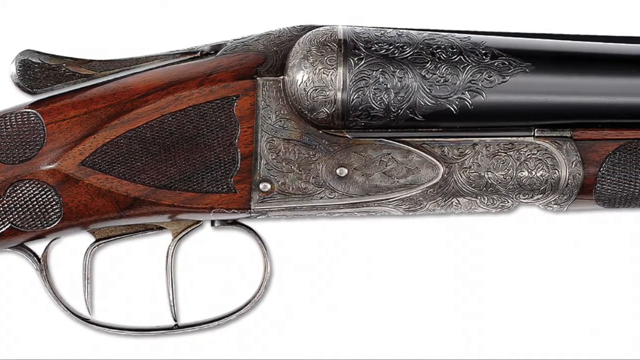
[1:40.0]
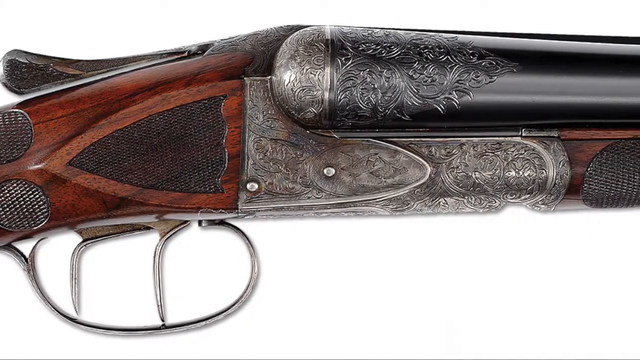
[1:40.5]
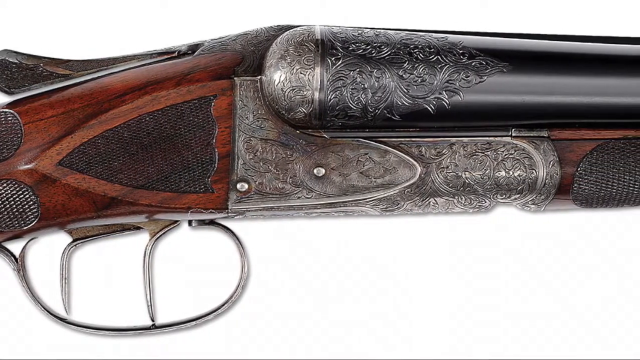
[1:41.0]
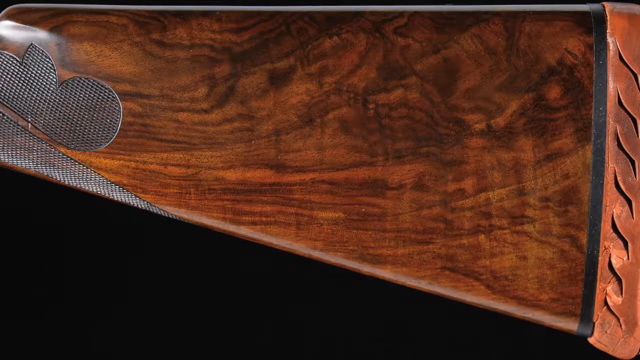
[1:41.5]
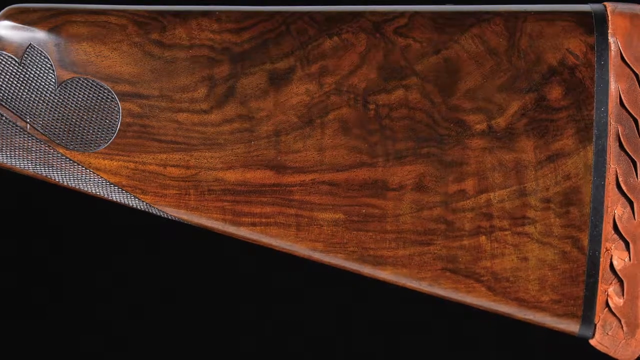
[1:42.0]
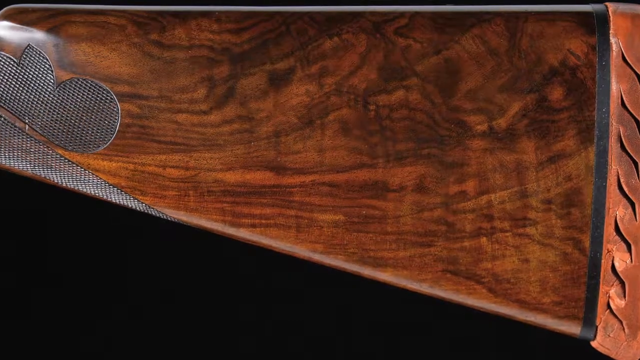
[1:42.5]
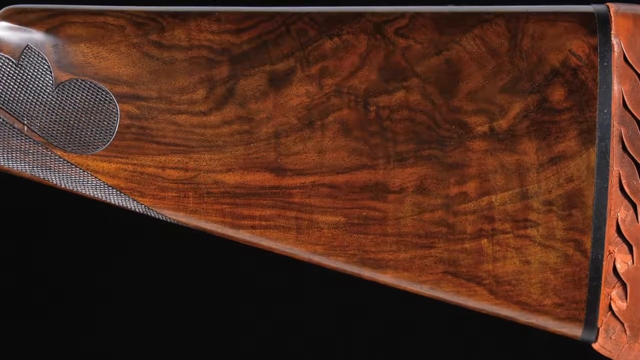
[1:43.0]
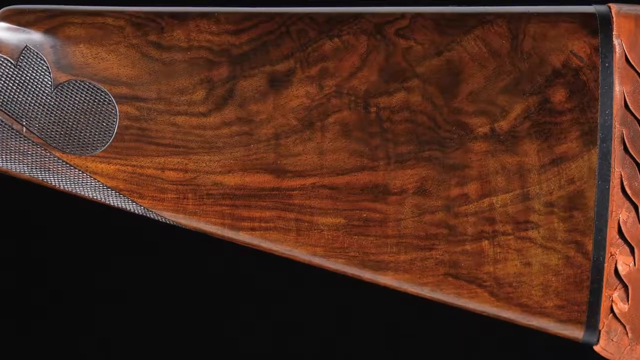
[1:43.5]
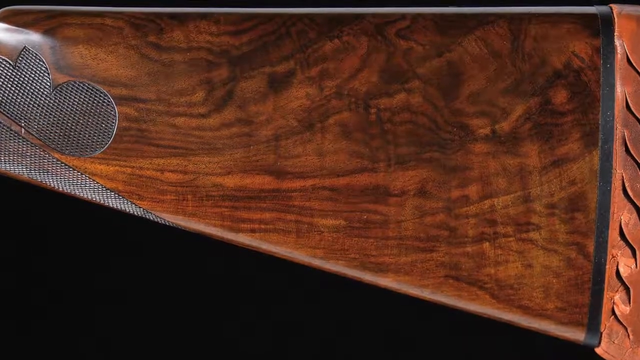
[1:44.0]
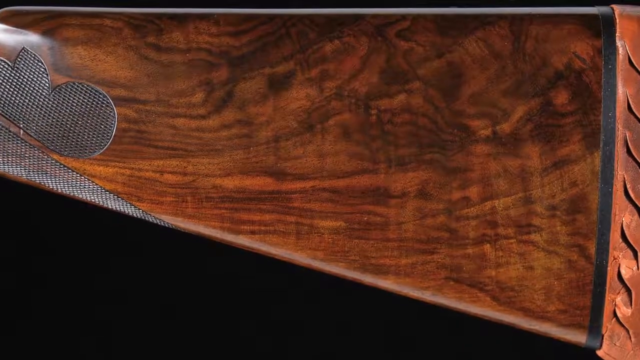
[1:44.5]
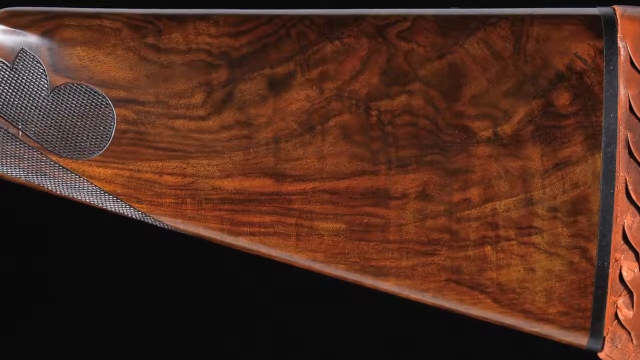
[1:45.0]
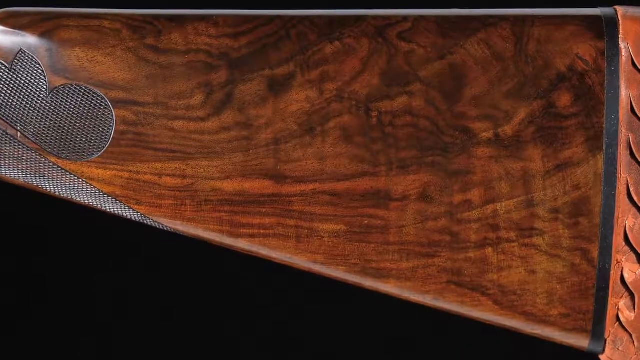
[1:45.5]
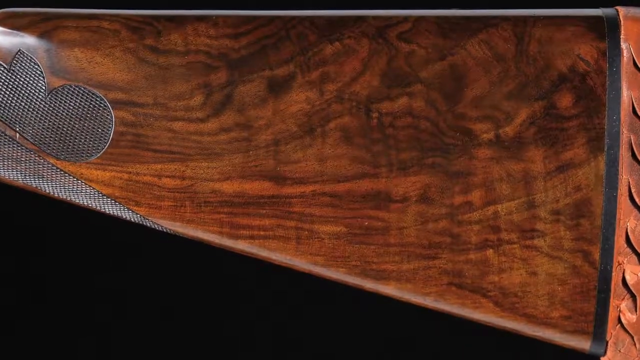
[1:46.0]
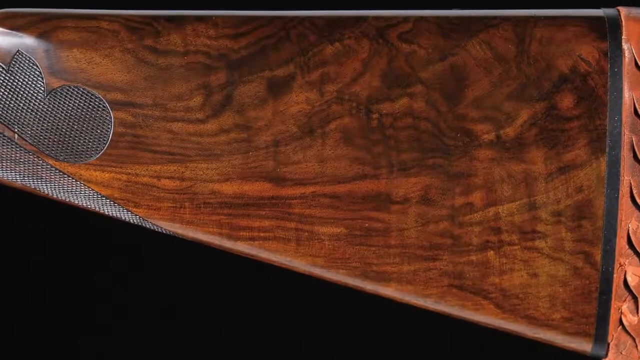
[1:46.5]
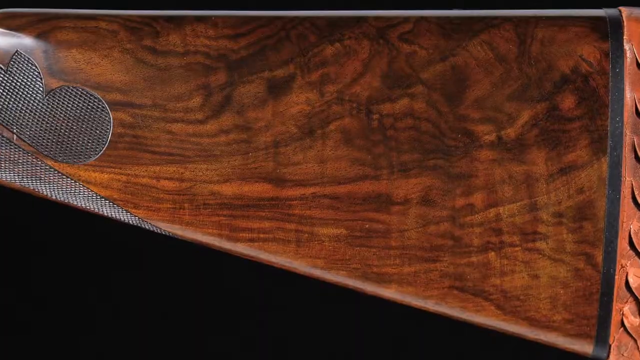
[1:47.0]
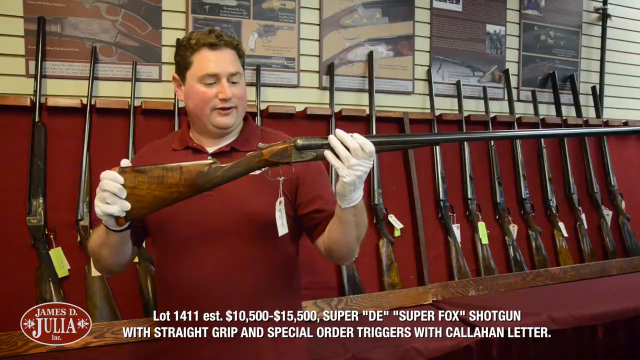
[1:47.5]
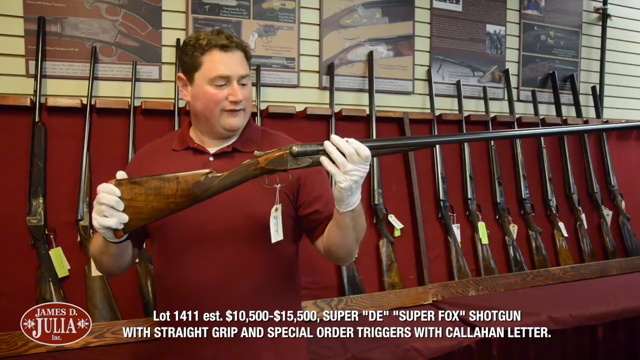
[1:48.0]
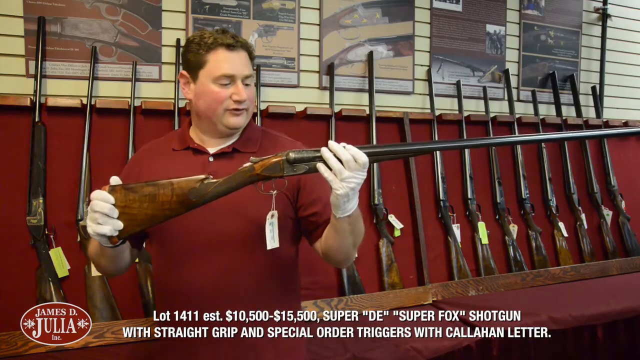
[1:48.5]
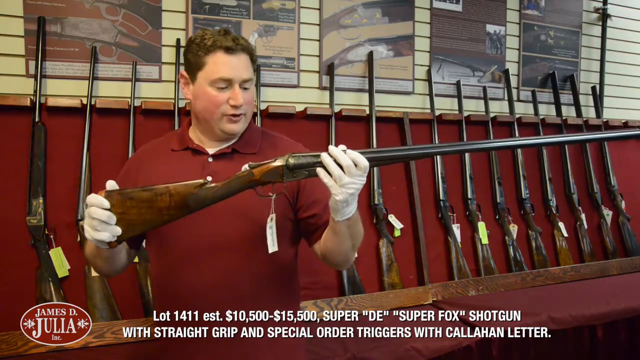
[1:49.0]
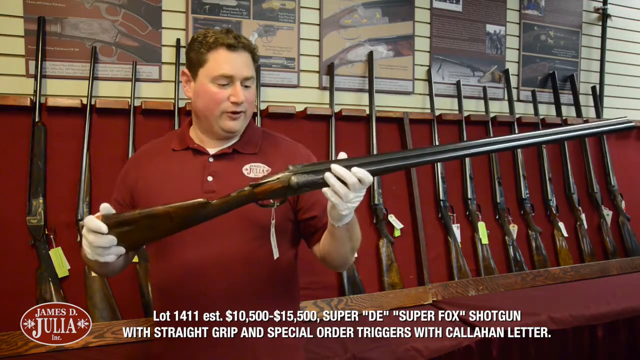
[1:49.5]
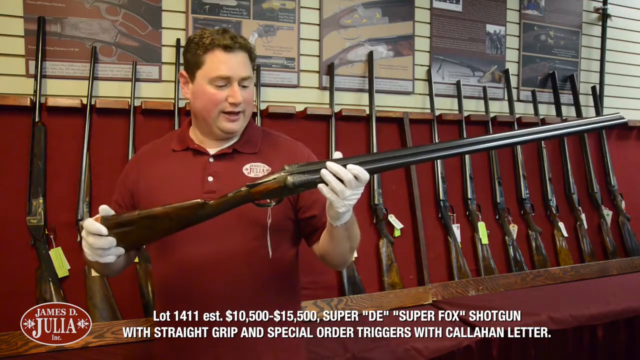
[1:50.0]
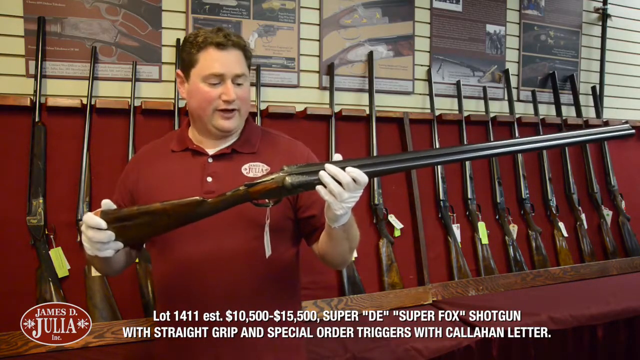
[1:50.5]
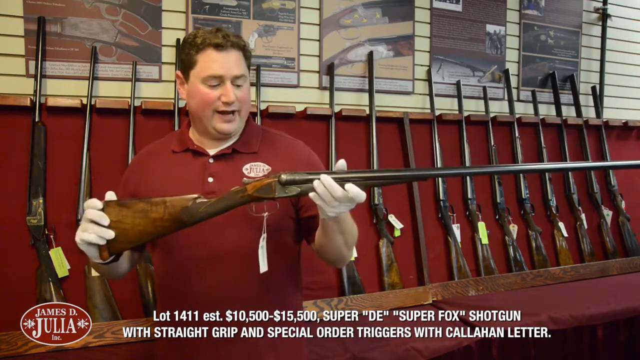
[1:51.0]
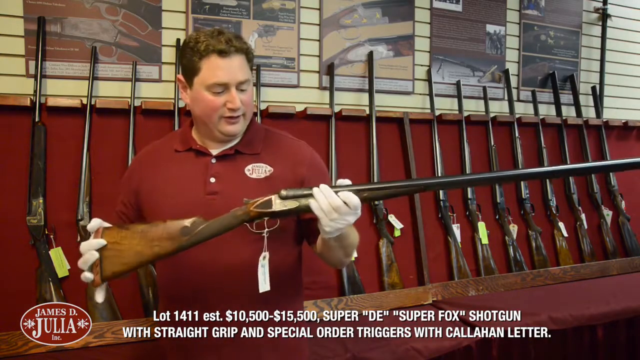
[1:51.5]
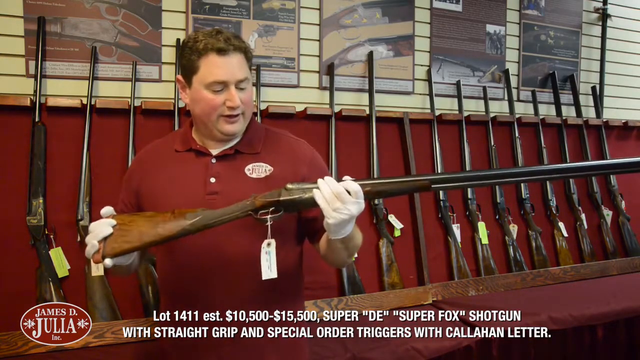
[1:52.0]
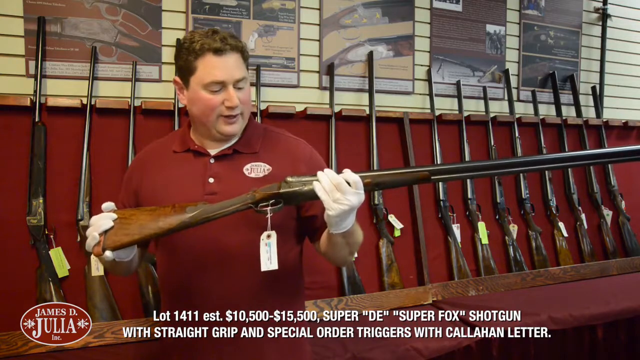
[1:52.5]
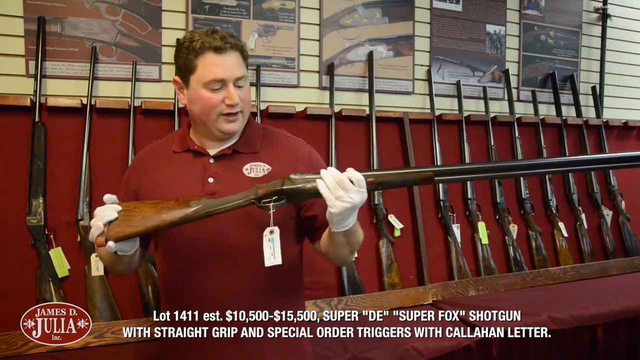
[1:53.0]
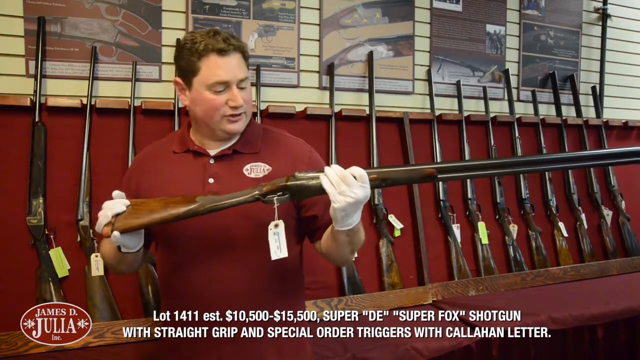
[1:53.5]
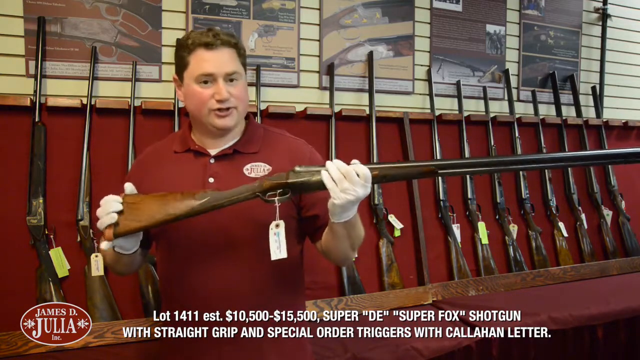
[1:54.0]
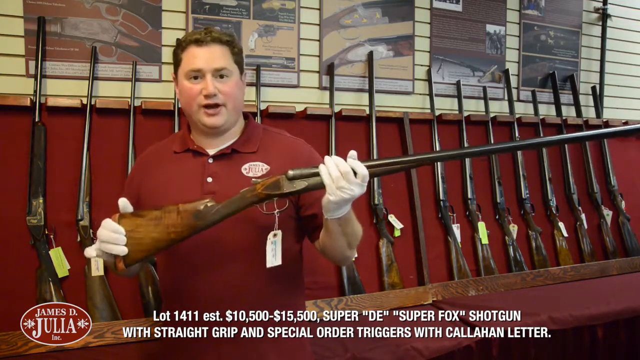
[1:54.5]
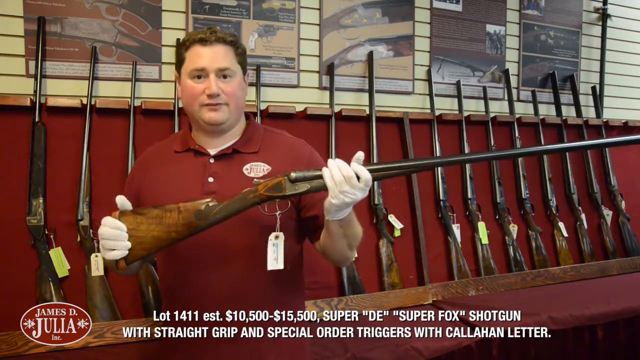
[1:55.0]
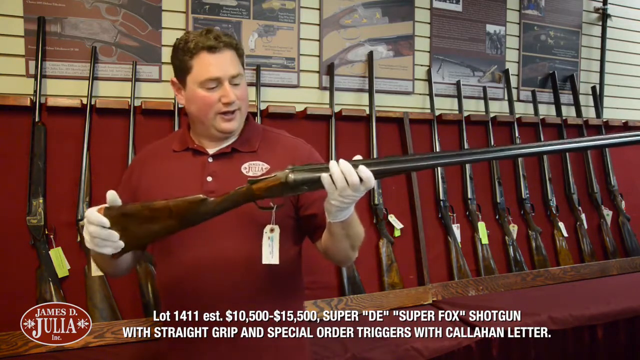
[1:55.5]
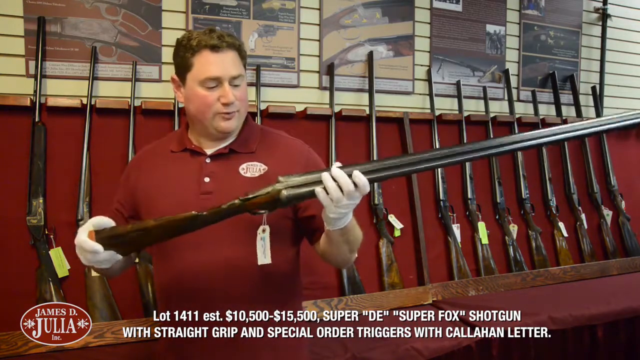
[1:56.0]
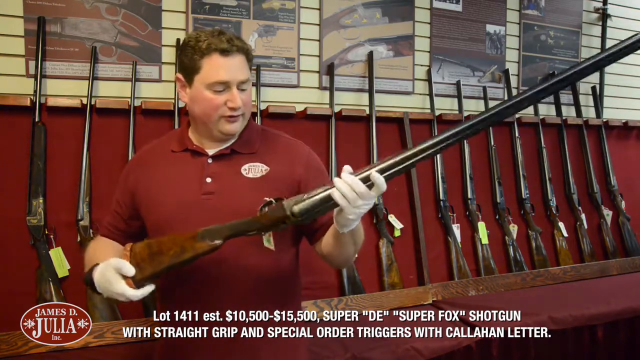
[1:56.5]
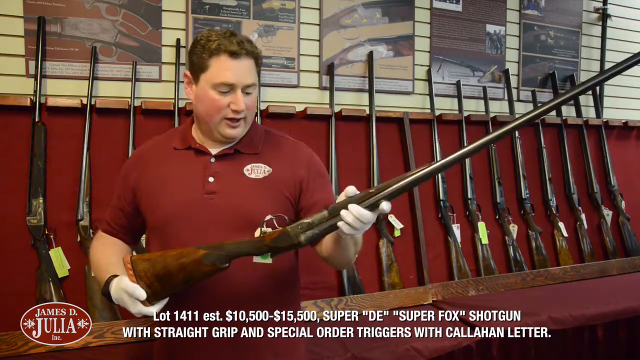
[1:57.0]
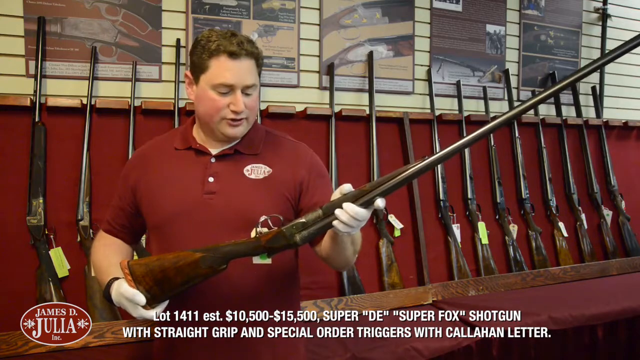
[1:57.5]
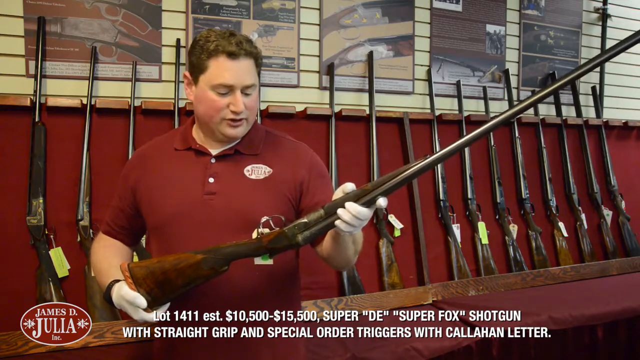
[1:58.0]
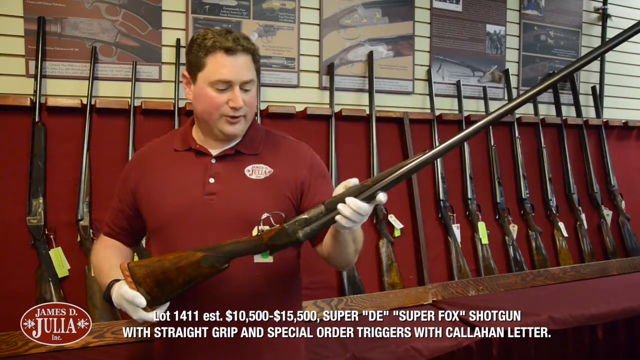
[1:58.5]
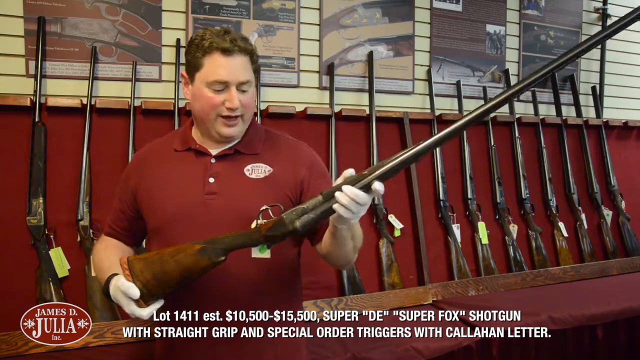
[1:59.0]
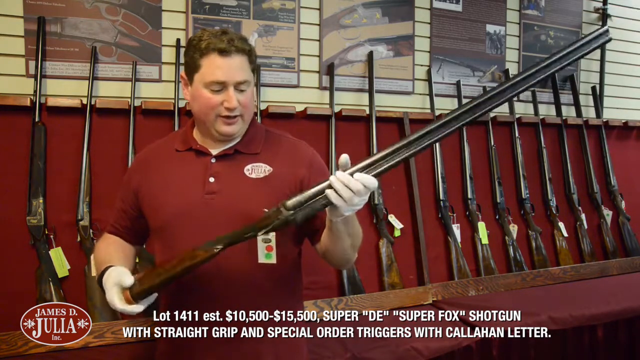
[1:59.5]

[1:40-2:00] An image shows the side of a long-barreled rifle, with dark wood grain detail on the side of the gun and detail etched into the metal parts that looks like flowing leaves or flowers, or a bit like wind. The camera kind of slowly pans from left to right, and then the image cuts to the back of the rifle, showing its wood part with swirling grains on the dark wood. The camera kind of slowly pans forward, kind of zooming in on that part of the gun to show the grain of the wood. The video then cuts to the man holding a long-barreled rifle in the same rifle shop. He holds it upright in both hands, then looks down at the gun and seems to be explaining some feature of it. He turns his hands so the gun is sitting on its side in his hands, then turns his hands toward himself, bringing the gun upright again. He then turns it the other way and back toward himself, putting it on its side once more.